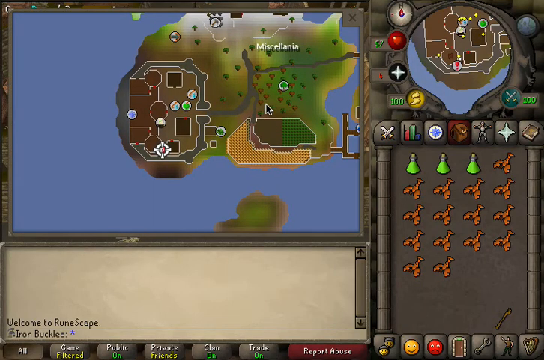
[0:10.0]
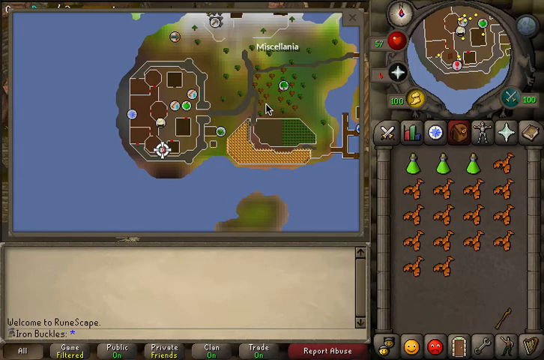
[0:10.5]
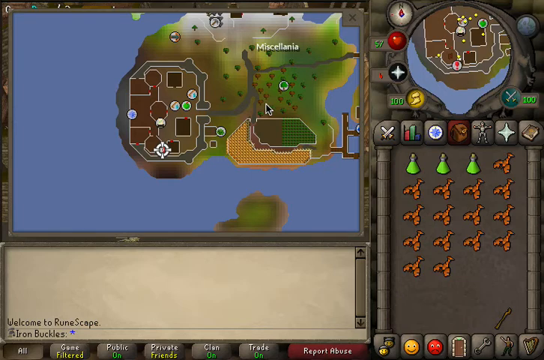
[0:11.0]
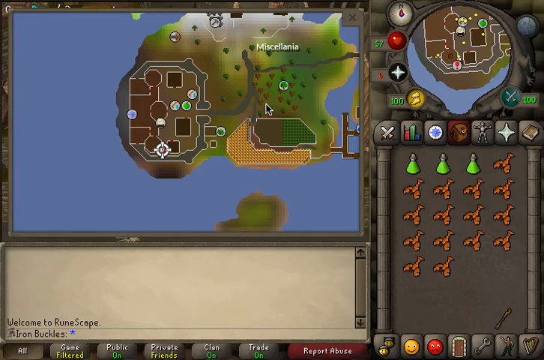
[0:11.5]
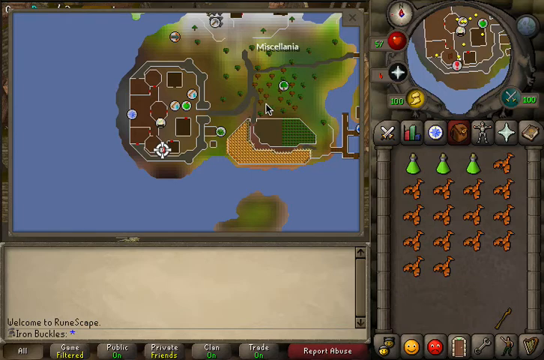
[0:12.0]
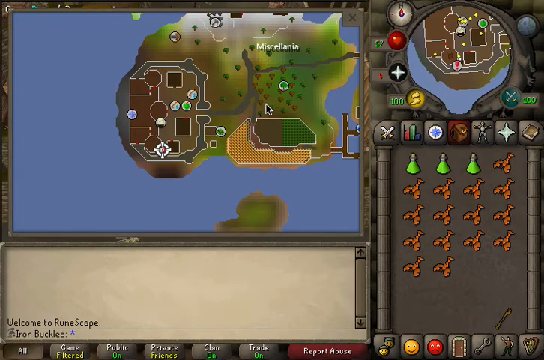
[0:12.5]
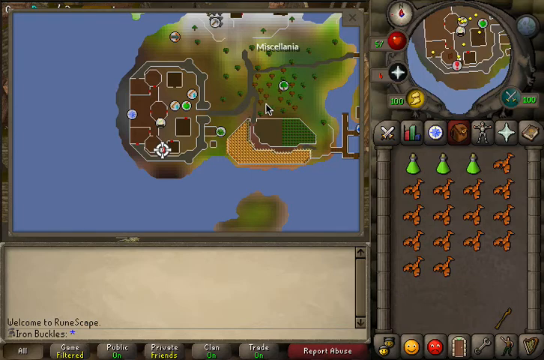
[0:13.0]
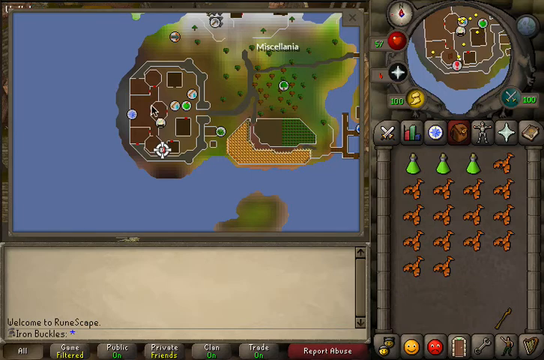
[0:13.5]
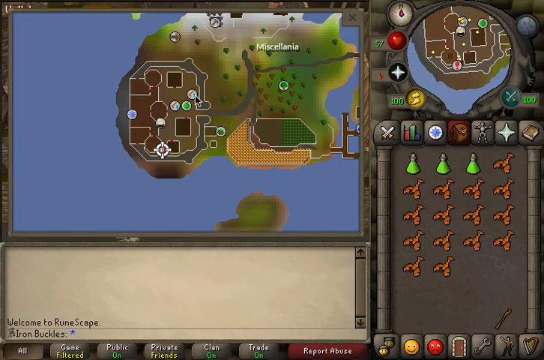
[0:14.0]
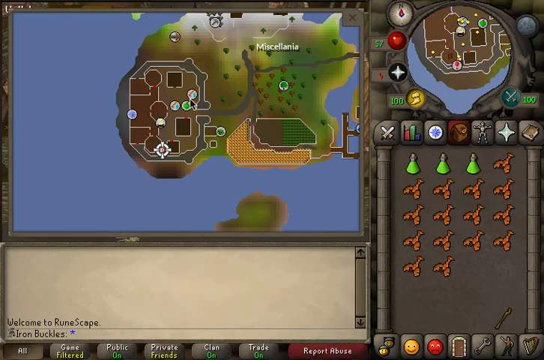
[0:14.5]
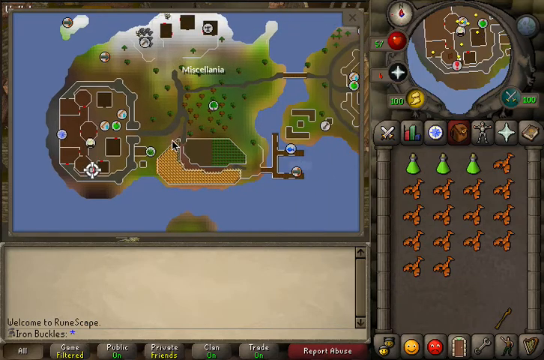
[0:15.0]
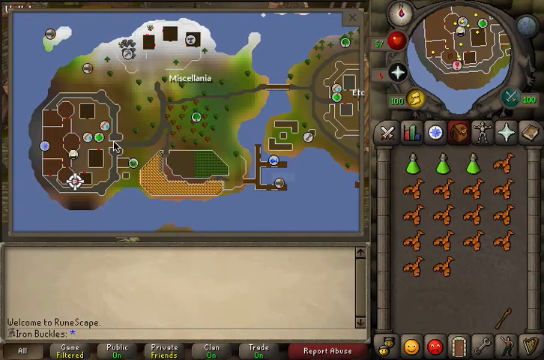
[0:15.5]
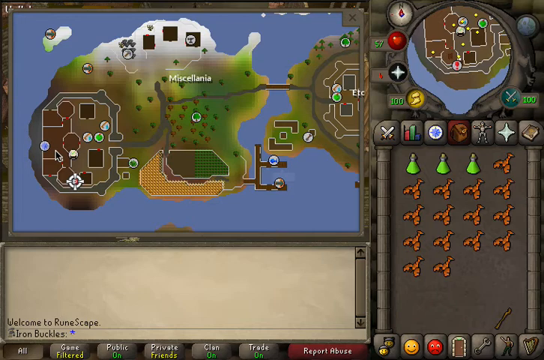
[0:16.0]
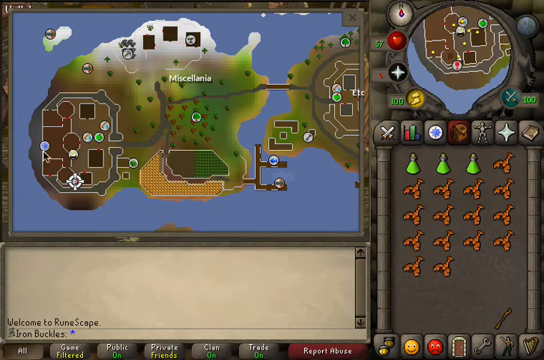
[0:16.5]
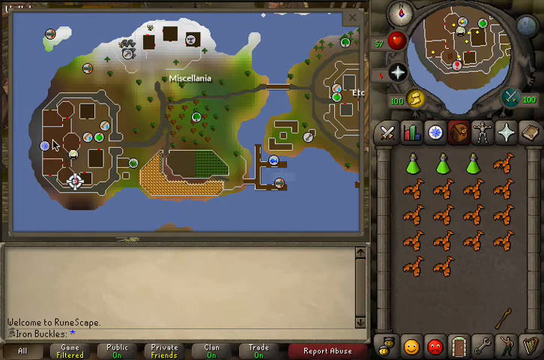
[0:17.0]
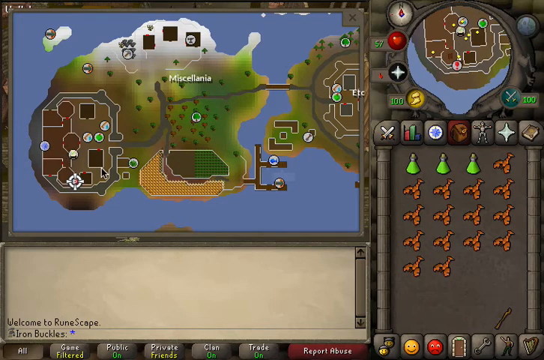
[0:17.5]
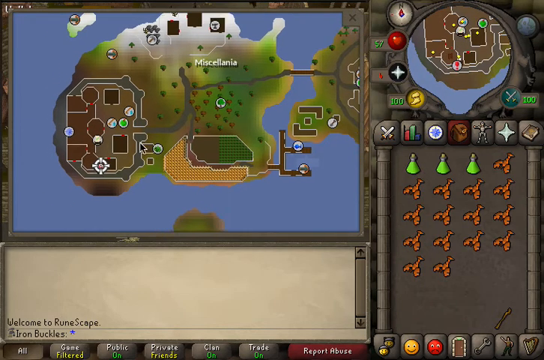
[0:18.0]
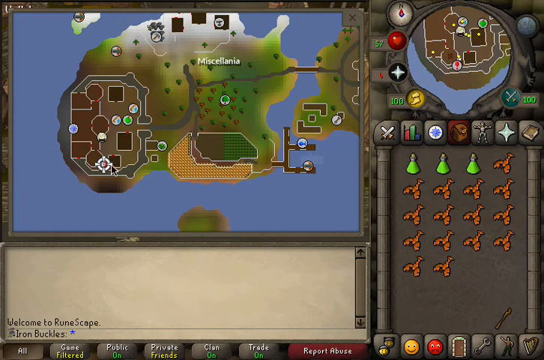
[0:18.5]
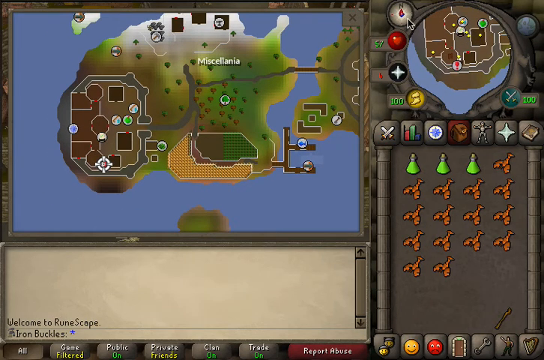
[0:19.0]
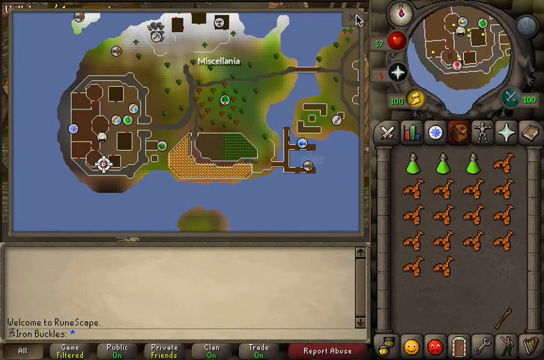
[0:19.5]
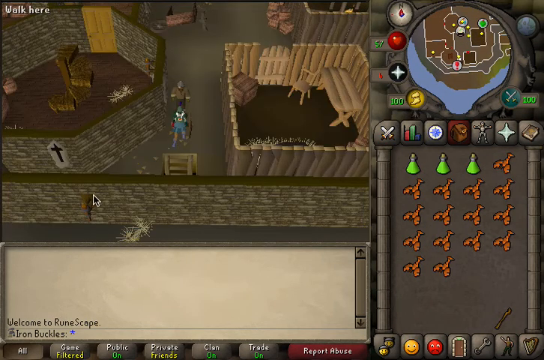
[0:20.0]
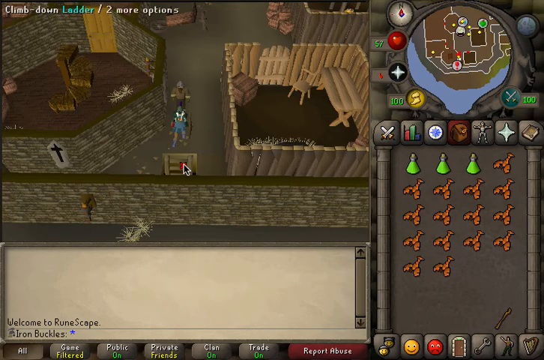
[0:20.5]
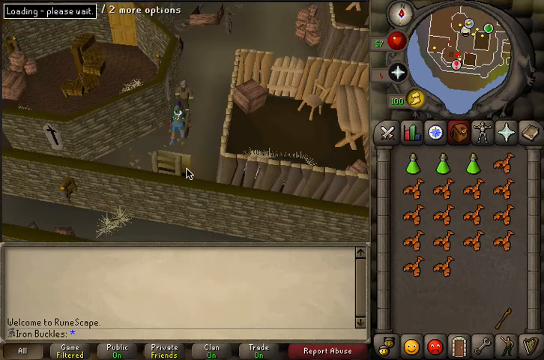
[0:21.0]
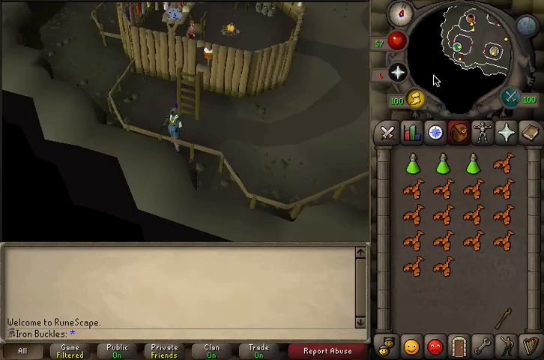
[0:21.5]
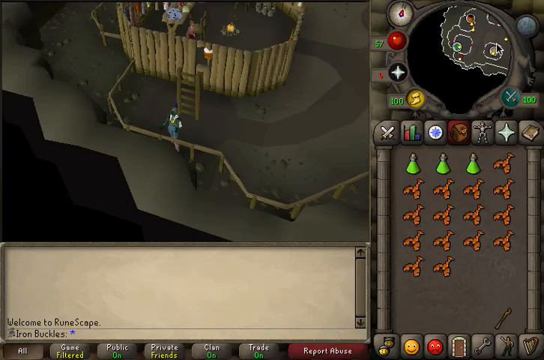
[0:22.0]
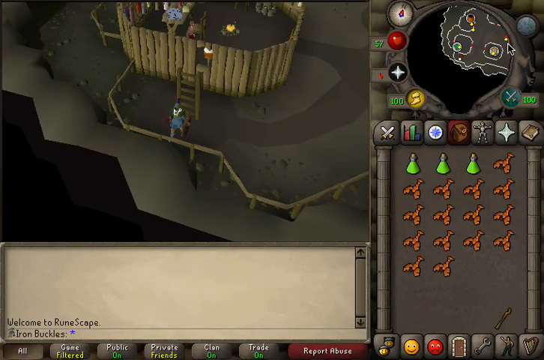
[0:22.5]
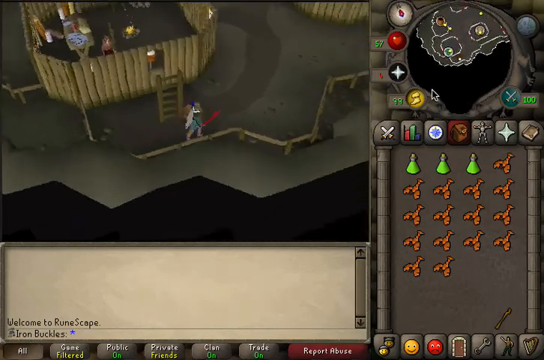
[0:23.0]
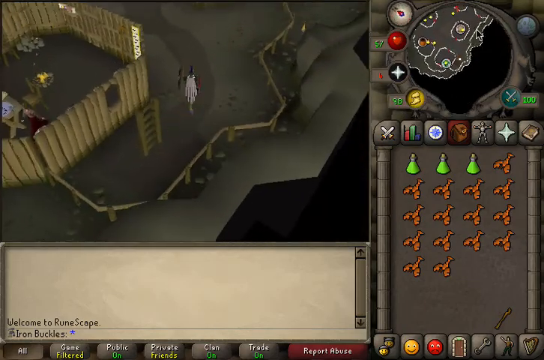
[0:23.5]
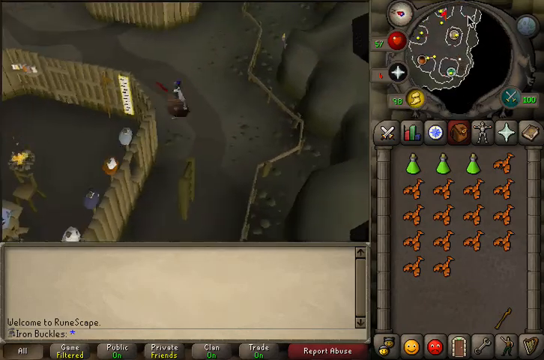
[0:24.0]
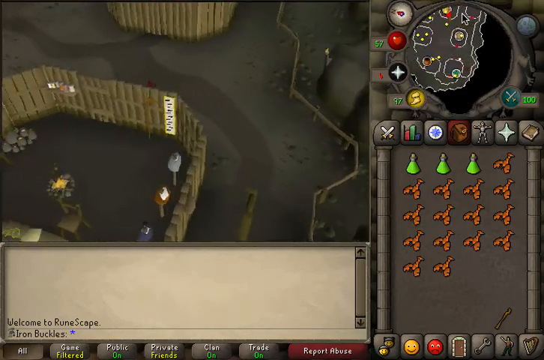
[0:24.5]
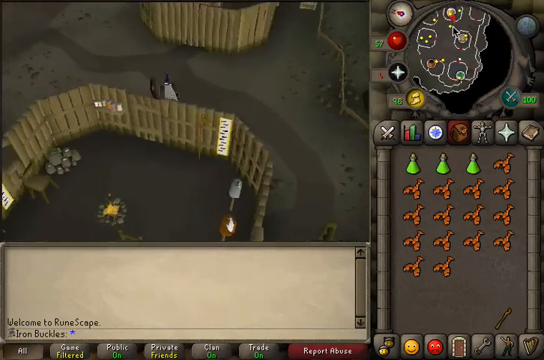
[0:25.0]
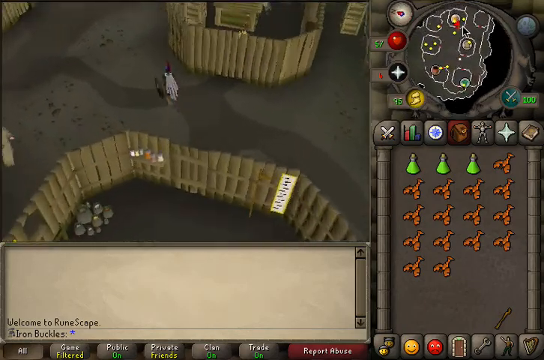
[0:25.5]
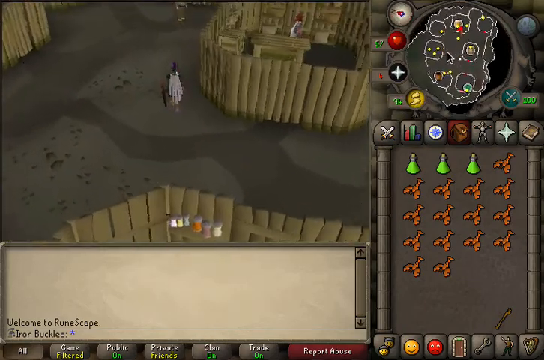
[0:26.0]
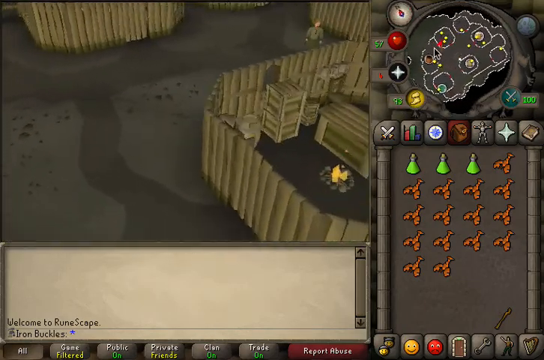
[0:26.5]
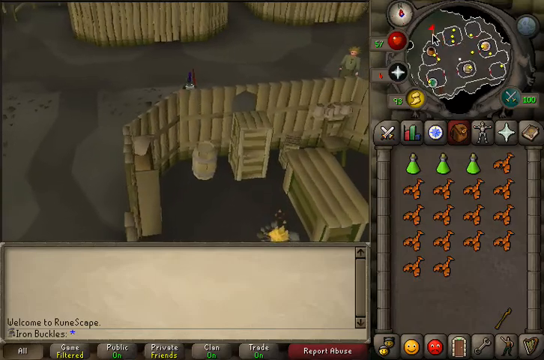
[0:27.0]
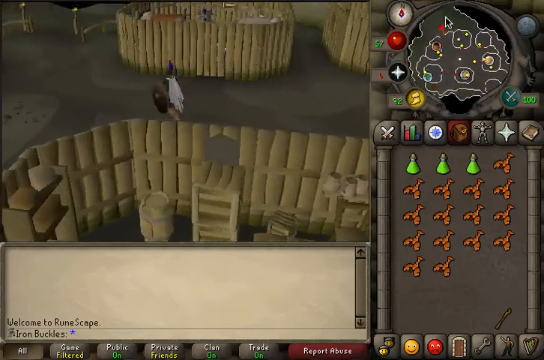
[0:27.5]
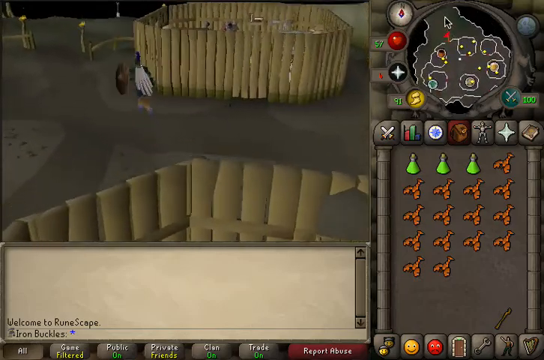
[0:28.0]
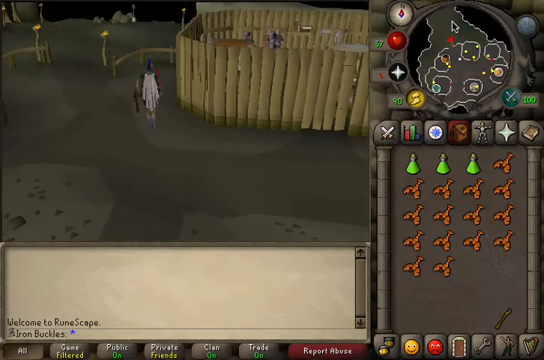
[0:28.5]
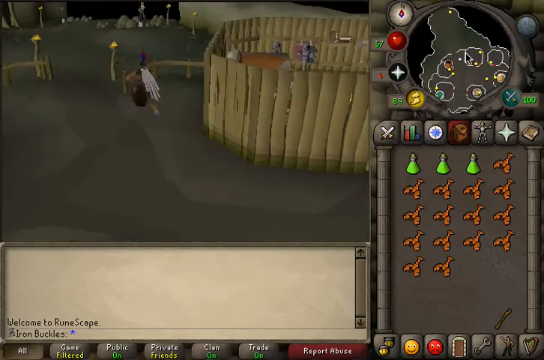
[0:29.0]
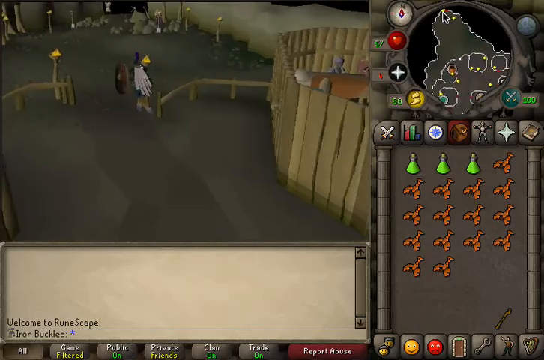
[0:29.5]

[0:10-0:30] The map area of the game seems to be in one window that takes up about half the screen but is not shaped as just a half. Part of the other half is below it, with a blank area, a small scrolling arrow and a tool to scroll up and down. To the right, apparently the other half, is a vertical section with the HUD area showing the map and various icons around it. One icon seems to be a golden boot with the number 100 in green next to it on the left; on the other side is what seems to be two crossed, overlapping swords, also with the number 100 next to it. Various other icons are underneath, including what seem to be some lobsters, though this is uncertain. The mouse moves over the area, highlighting parts of the town, and then the character is moved around various places in the town.